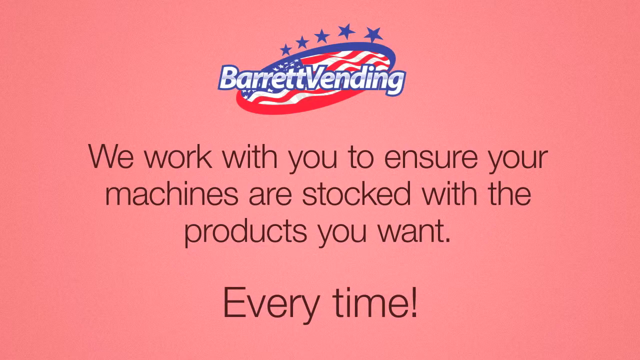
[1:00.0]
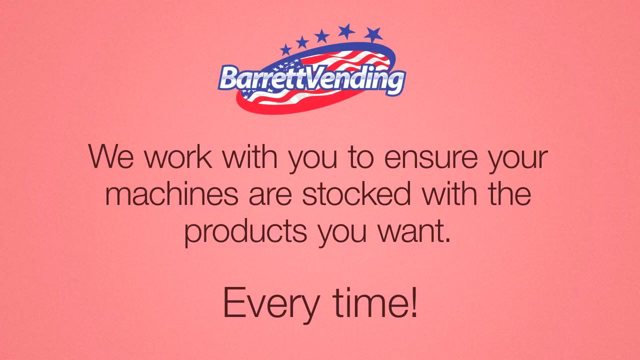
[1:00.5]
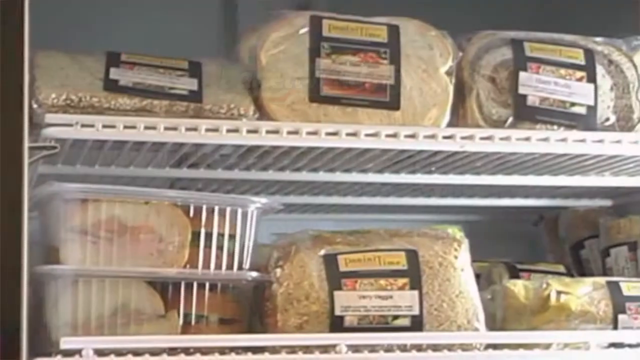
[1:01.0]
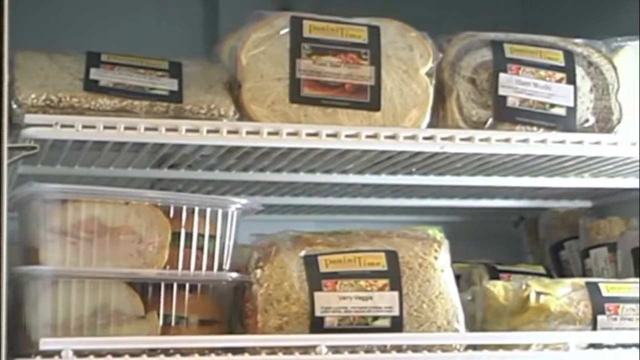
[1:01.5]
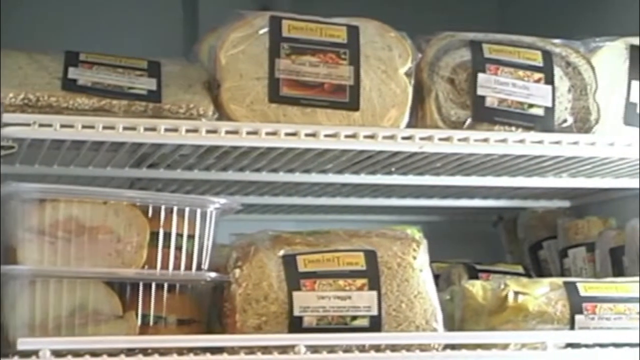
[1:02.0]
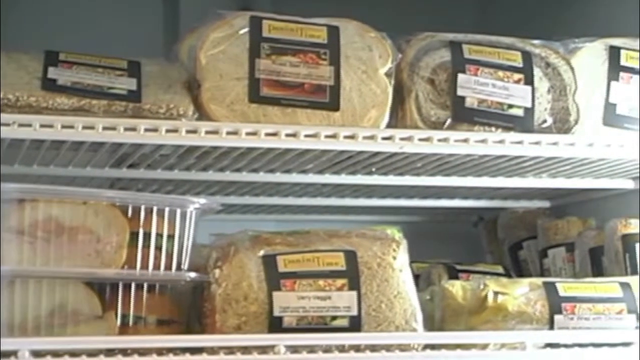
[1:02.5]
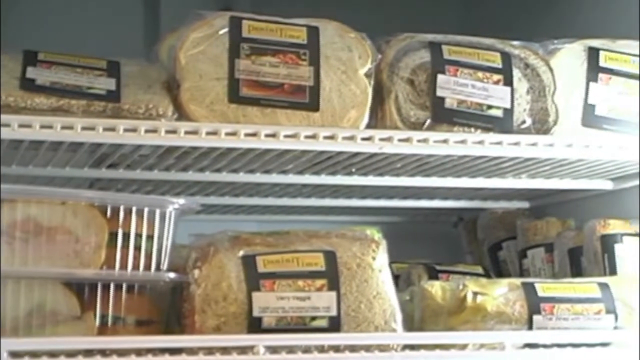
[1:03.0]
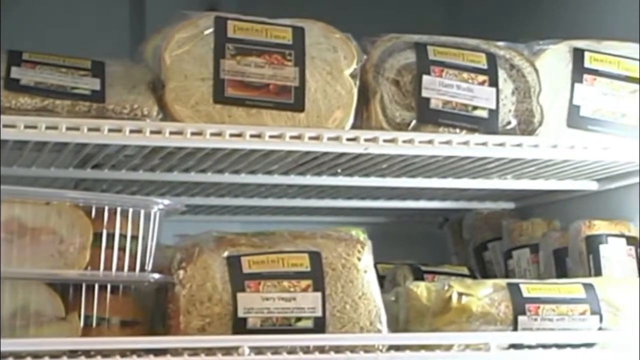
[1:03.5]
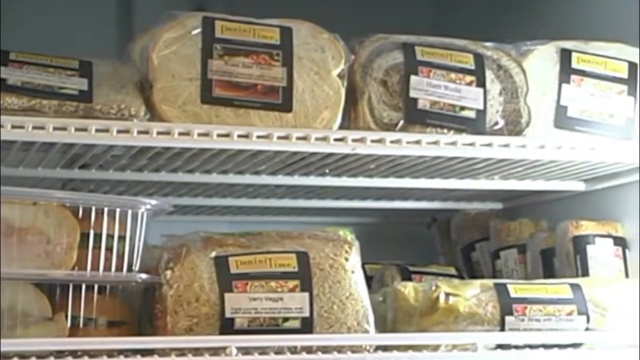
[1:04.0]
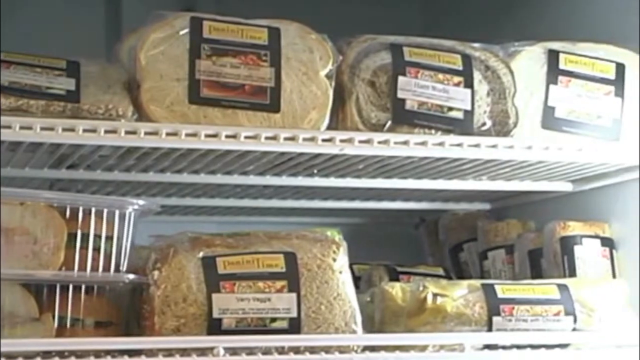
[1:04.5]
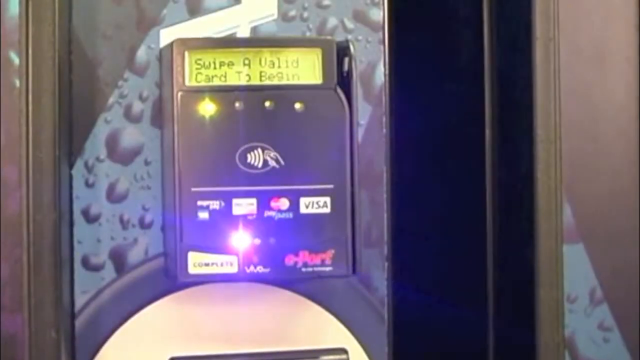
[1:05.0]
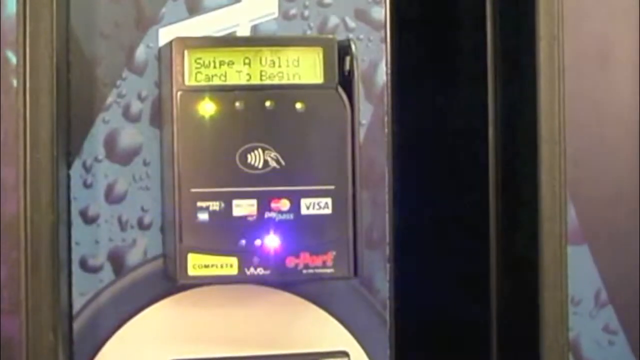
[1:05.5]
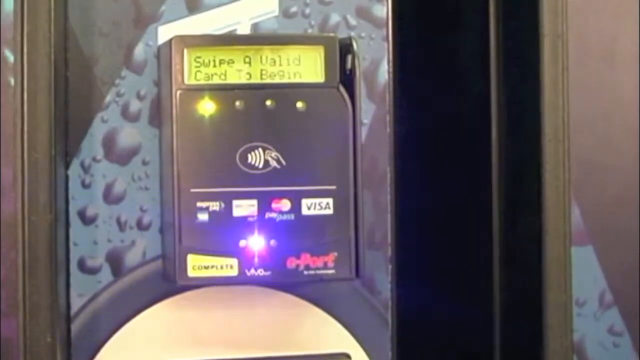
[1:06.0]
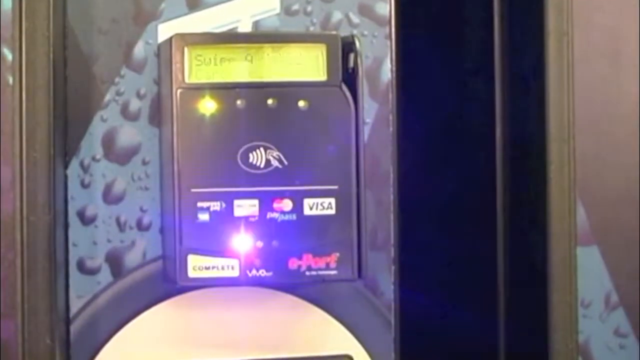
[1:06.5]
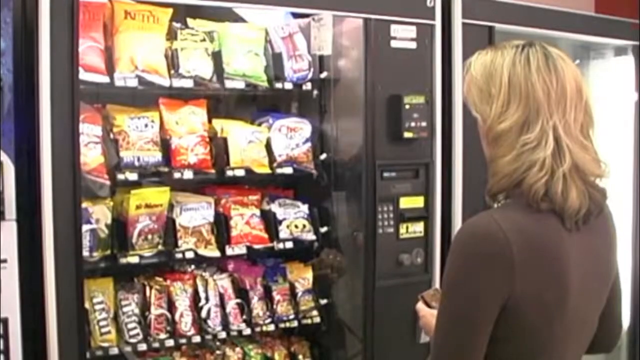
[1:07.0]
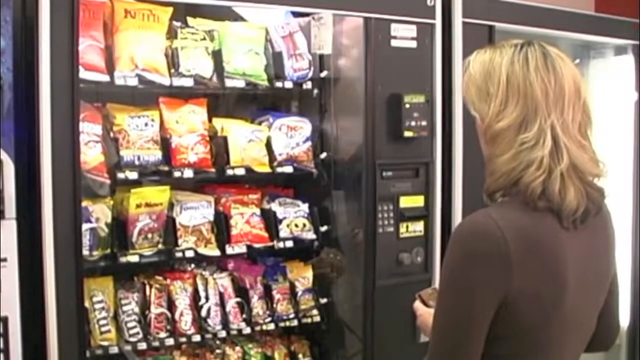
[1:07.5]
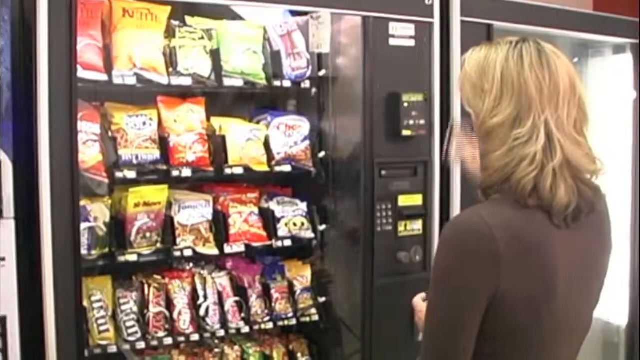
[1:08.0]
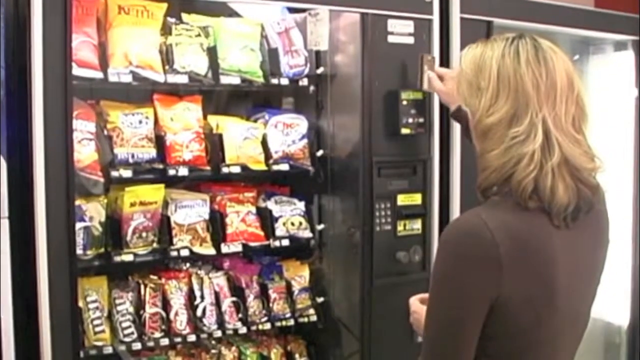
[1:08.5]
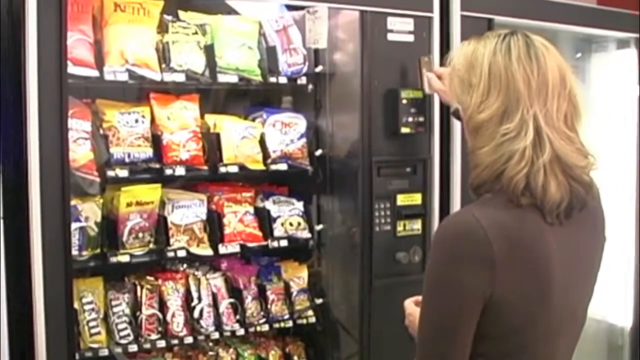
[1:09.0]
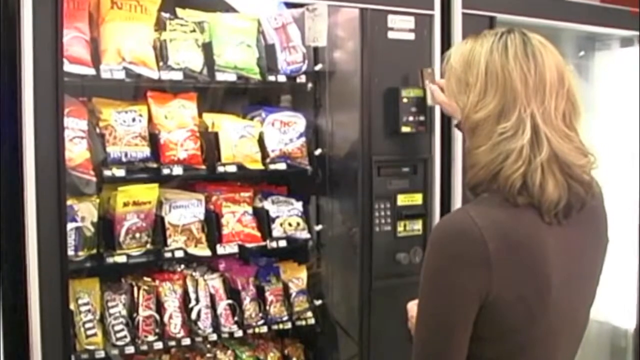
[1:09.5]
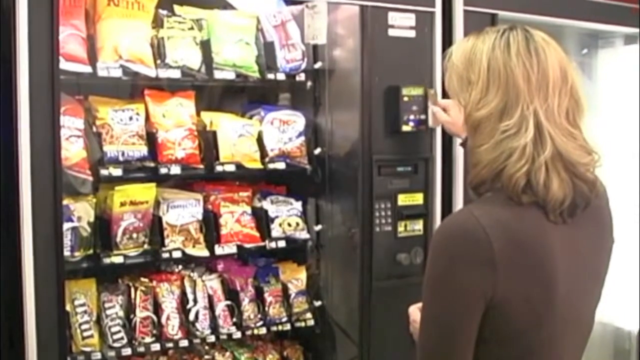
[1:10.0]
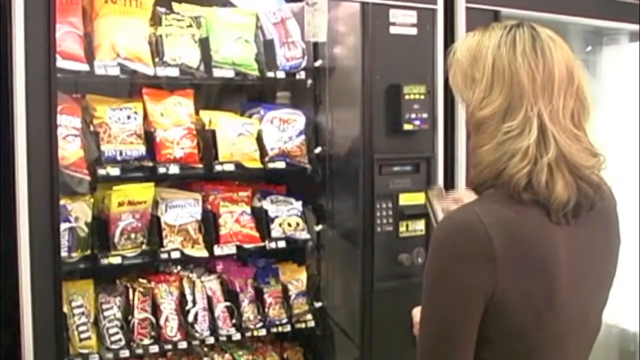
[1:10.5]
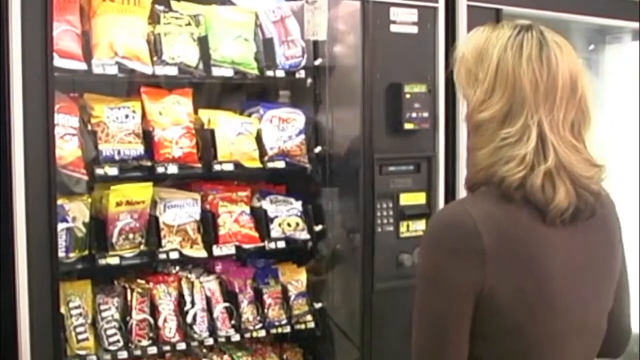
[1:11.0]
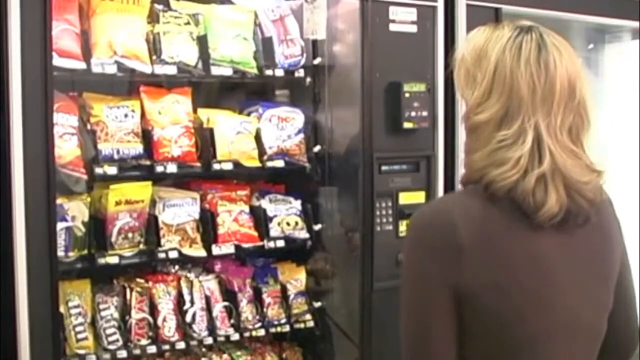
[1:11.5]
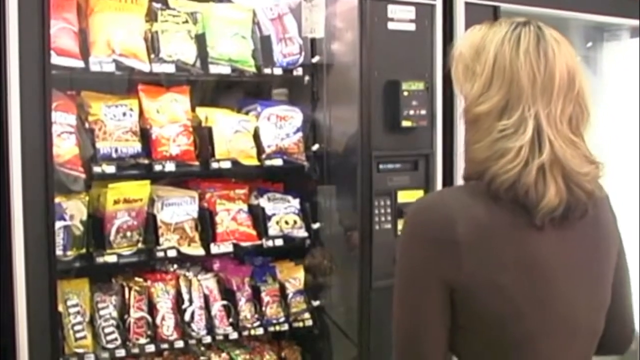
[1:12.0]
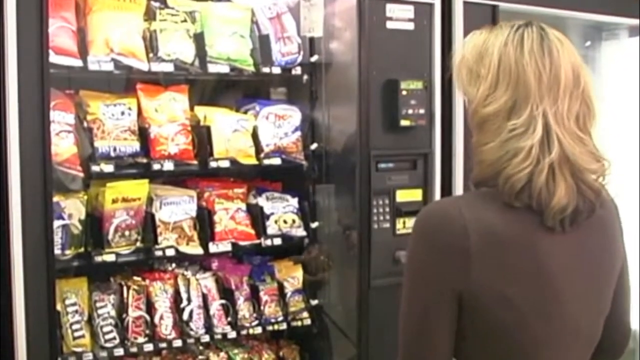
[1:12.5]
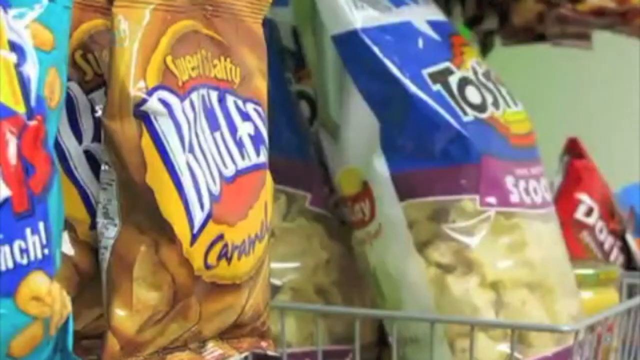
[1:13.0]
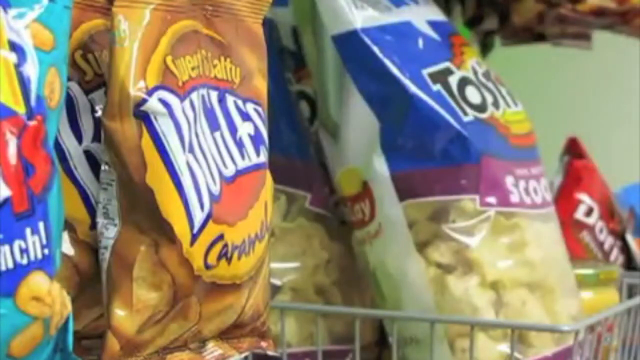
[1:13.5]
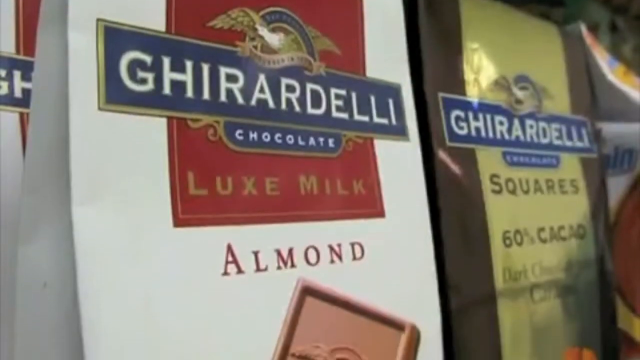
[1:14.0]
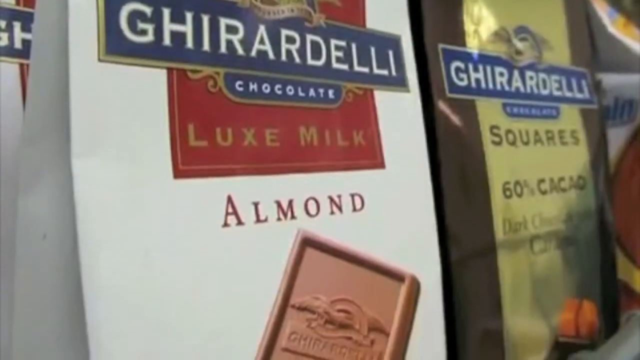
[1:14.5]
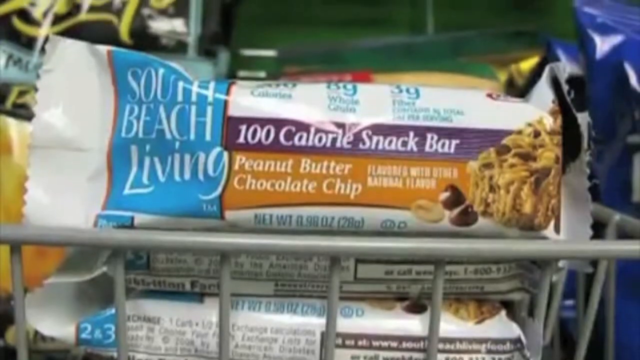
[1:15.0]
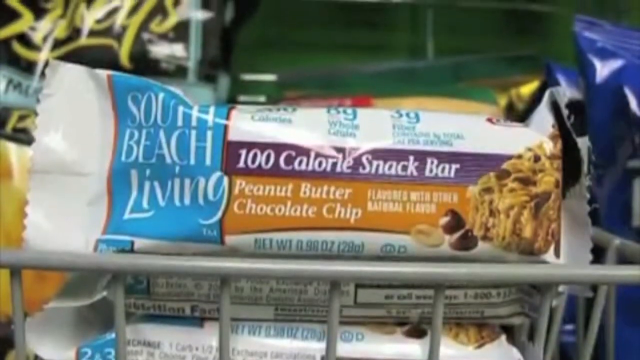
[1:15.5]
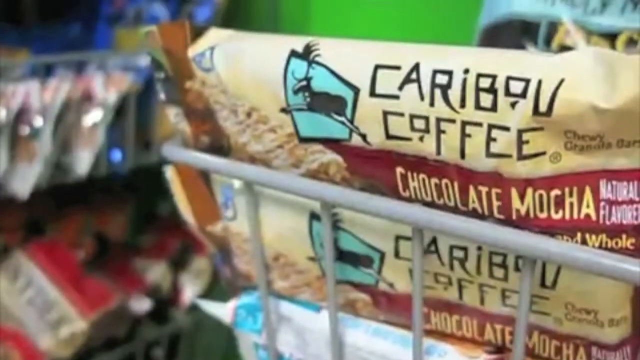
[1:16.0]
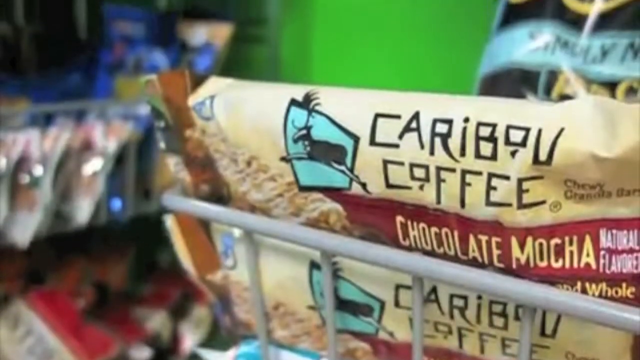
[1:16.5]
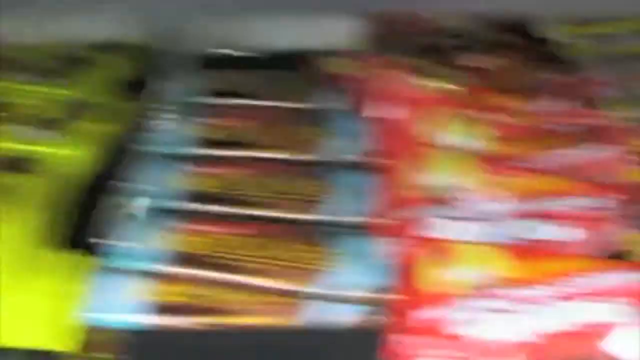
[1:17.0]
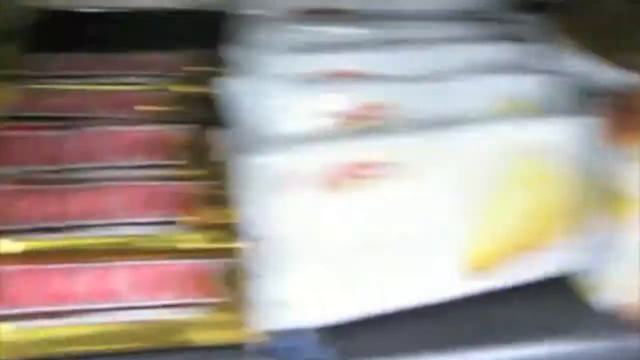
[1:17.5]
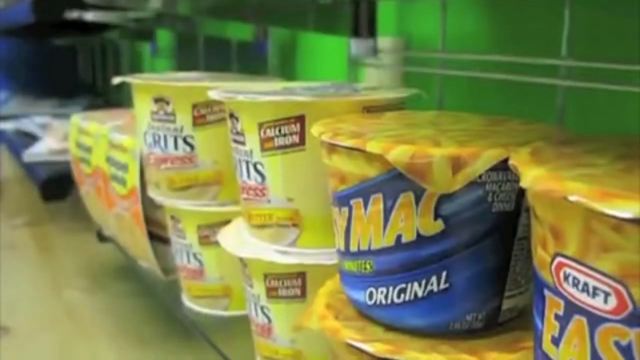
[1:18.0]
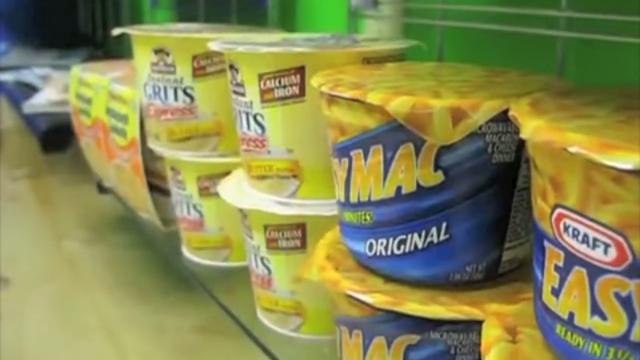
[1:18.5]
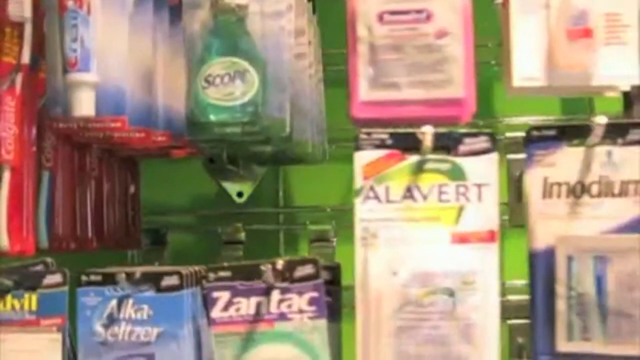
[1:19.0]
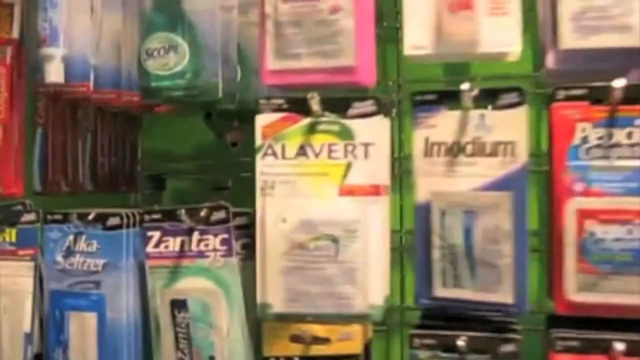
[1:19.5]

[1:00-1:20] Sandwiches and different types of packaged foods sold from the vending machines are shown. A close-up shows the card reader, where a valid card must be swiped to begin; the device lists the different payment methods and cards it accepts. A blonde woman swipes her card in the device, probably getting products from the vending machine. Close-ups then show different snacks, such as Doritos and Tostitos, along with almond chocolate, peanut butter chocolate chip snack bars, Caribbean coffee, and pharmacy product brands such as alavert, imodium and zantac. The sequence ends on a close-up of Nature's Own bread.